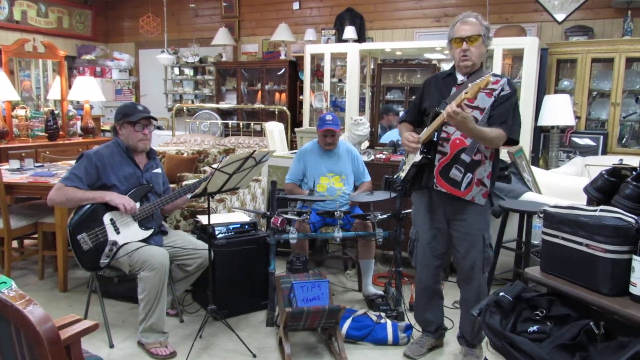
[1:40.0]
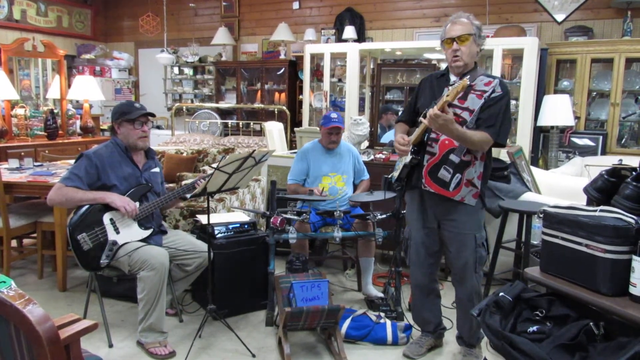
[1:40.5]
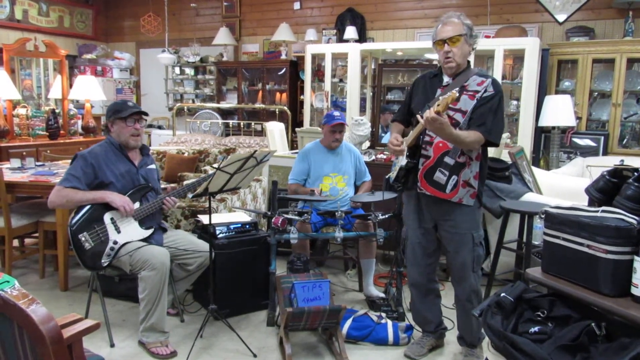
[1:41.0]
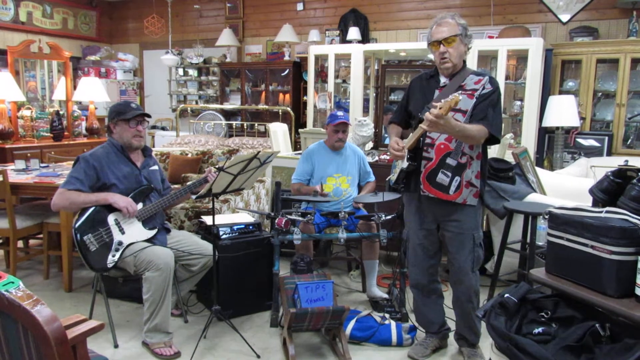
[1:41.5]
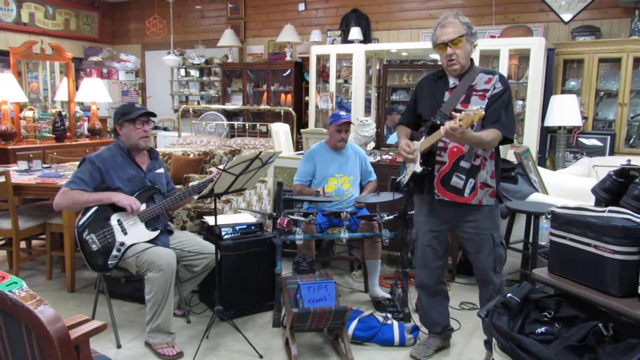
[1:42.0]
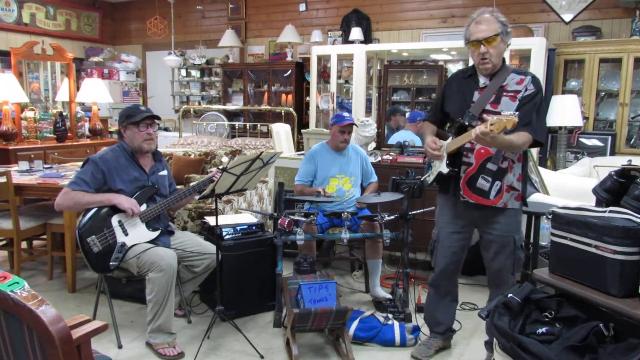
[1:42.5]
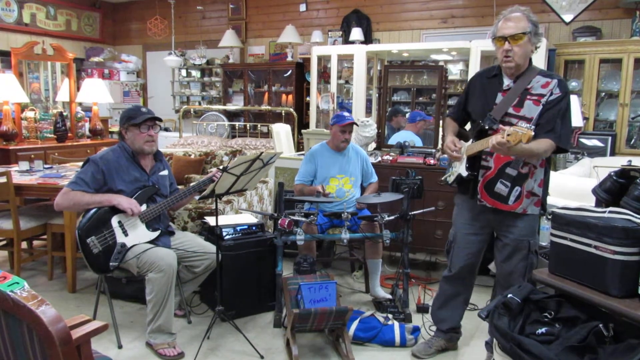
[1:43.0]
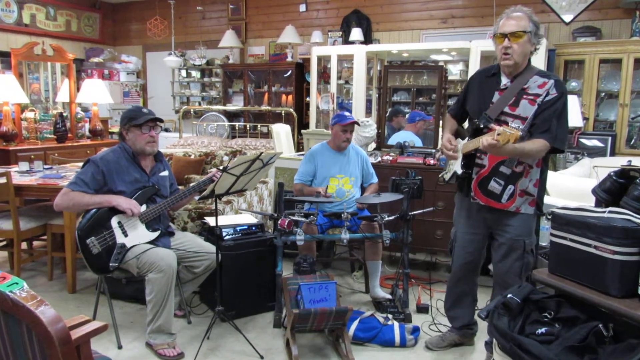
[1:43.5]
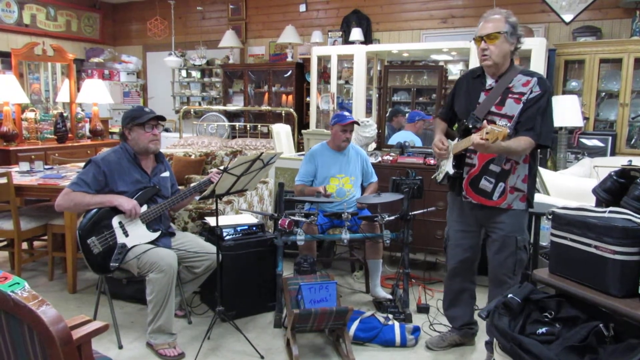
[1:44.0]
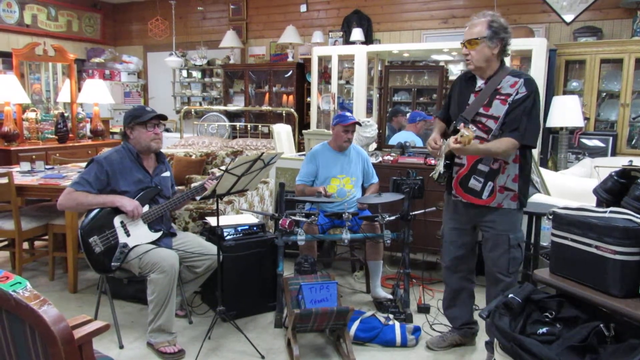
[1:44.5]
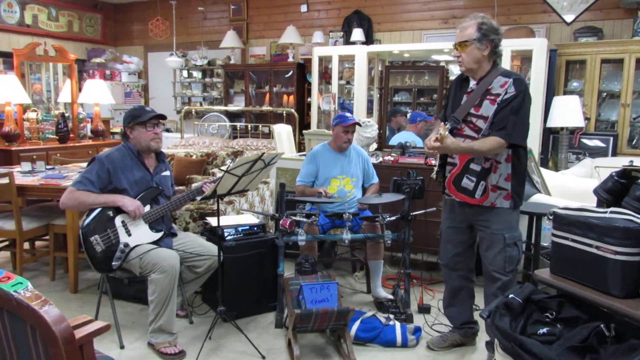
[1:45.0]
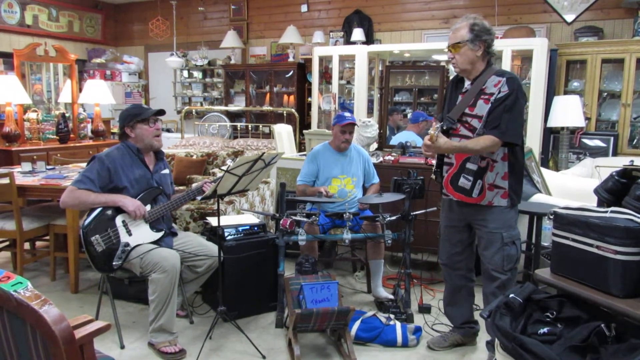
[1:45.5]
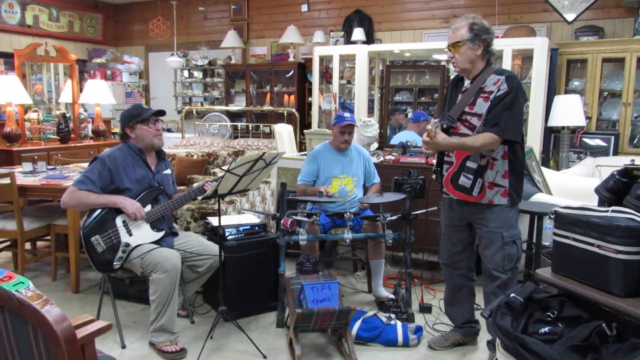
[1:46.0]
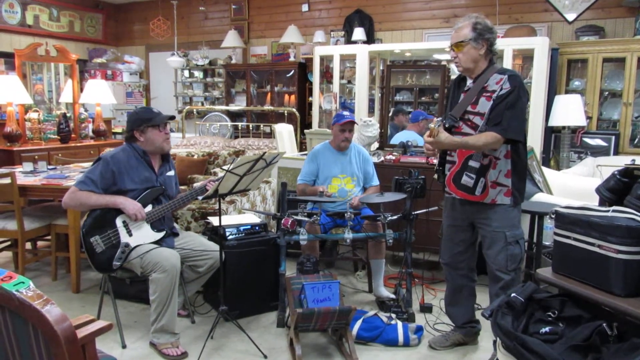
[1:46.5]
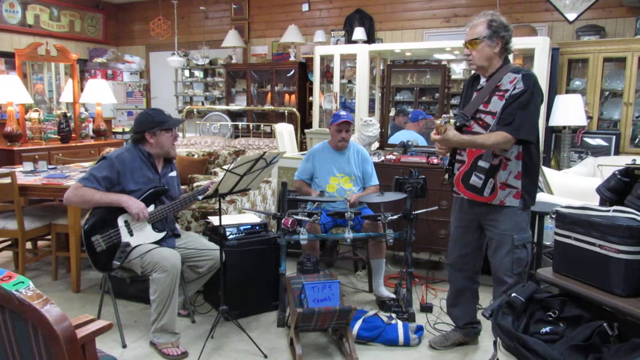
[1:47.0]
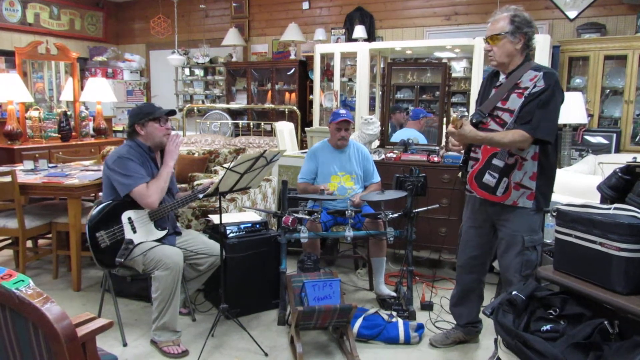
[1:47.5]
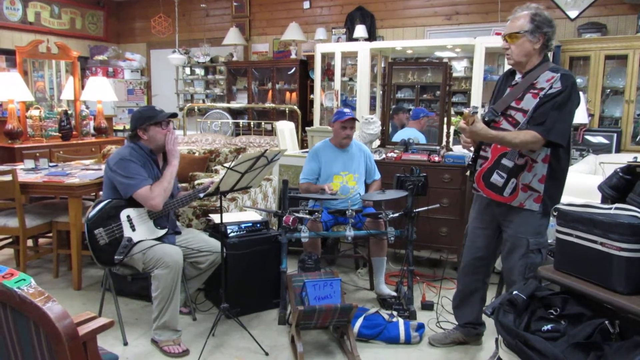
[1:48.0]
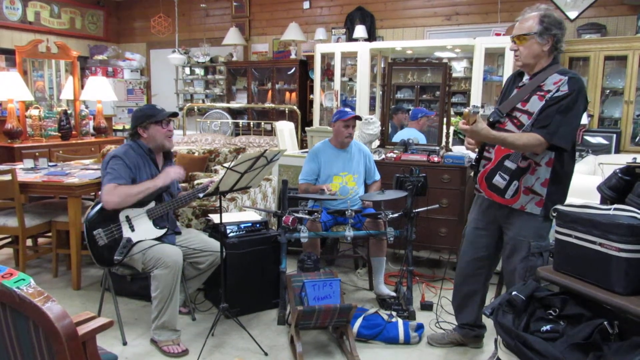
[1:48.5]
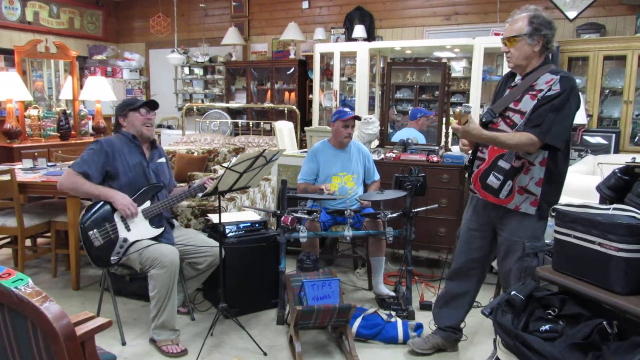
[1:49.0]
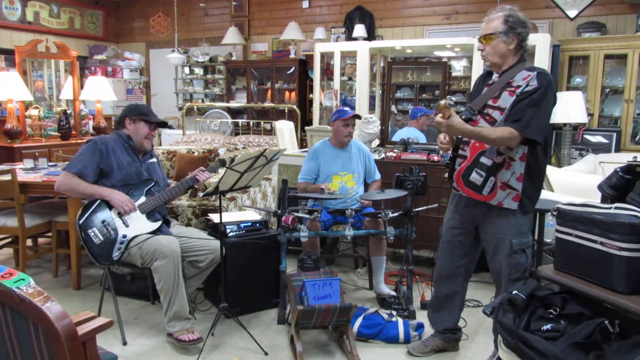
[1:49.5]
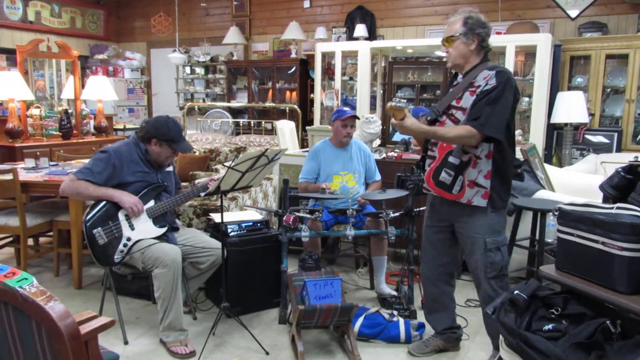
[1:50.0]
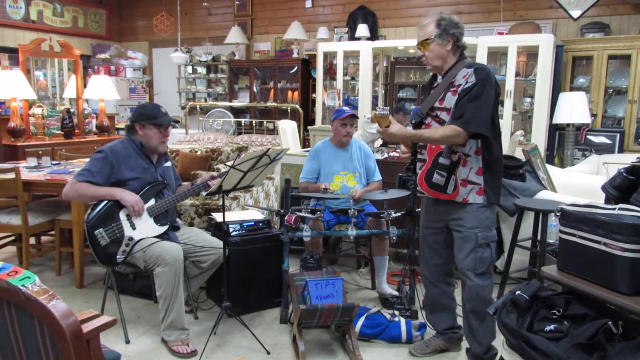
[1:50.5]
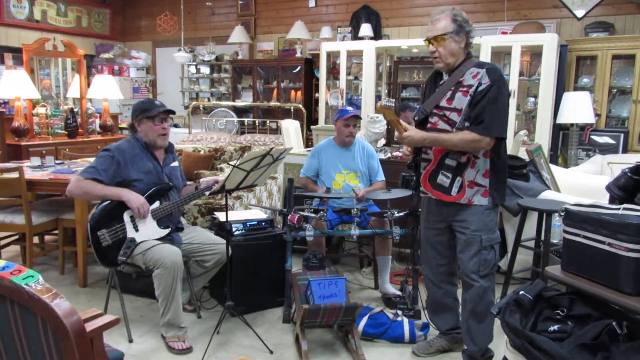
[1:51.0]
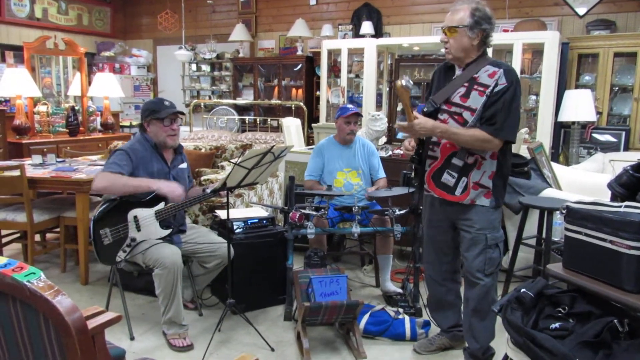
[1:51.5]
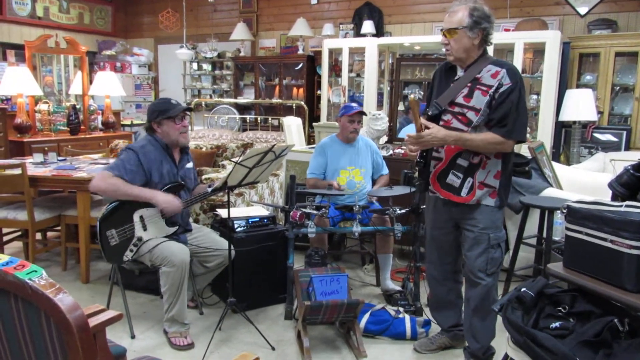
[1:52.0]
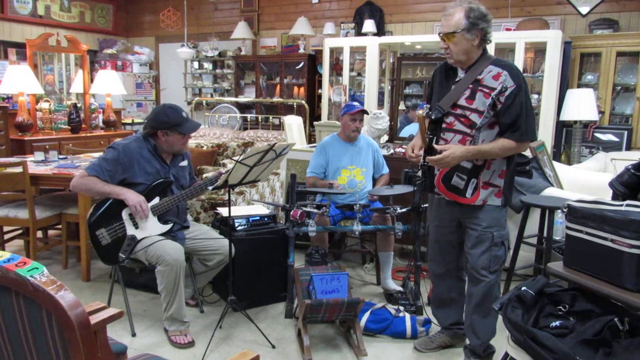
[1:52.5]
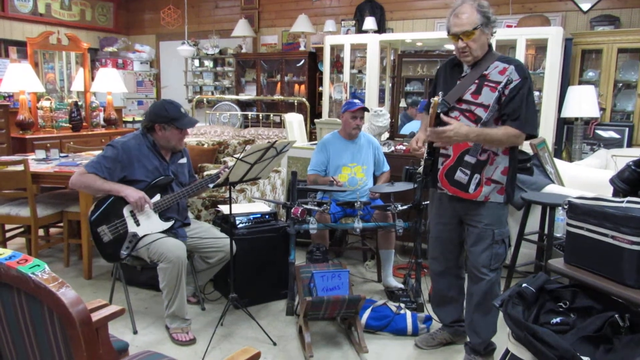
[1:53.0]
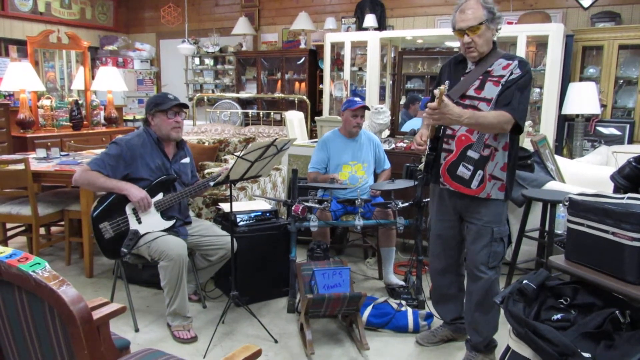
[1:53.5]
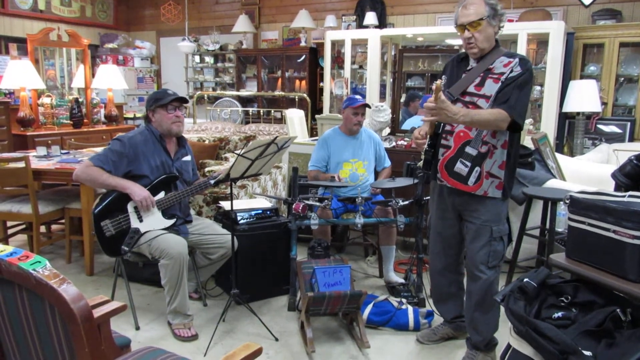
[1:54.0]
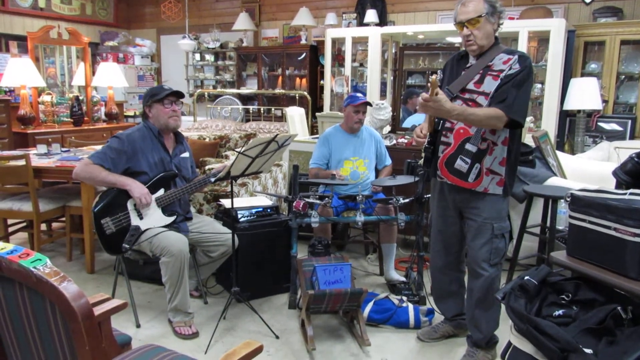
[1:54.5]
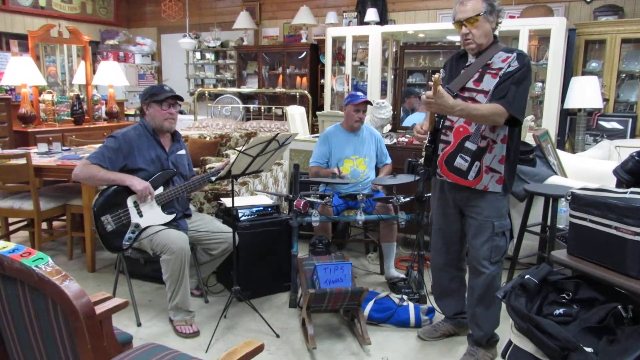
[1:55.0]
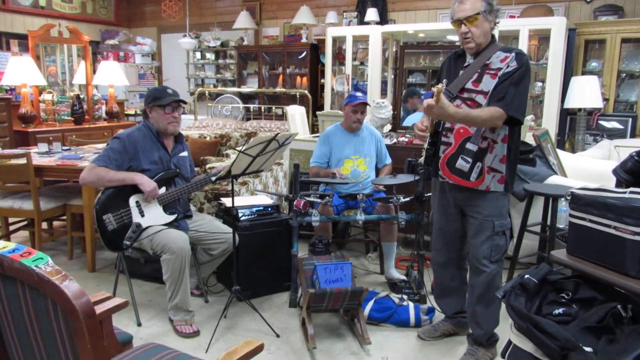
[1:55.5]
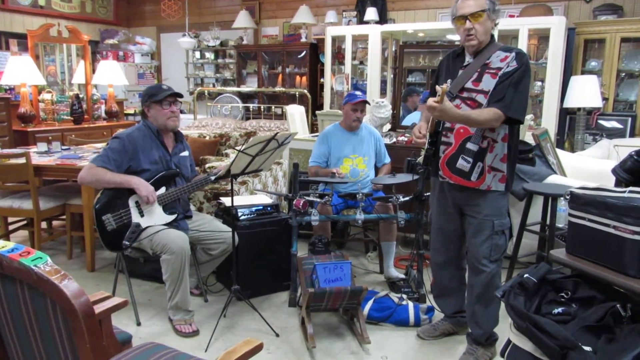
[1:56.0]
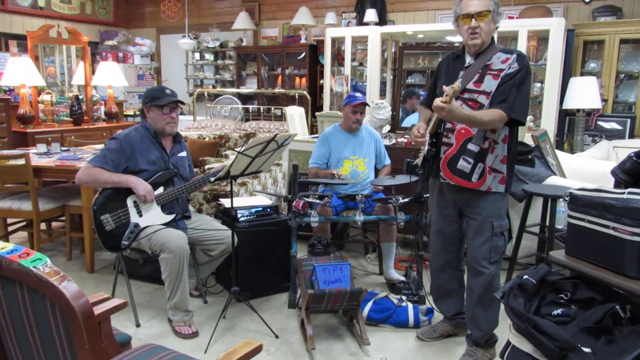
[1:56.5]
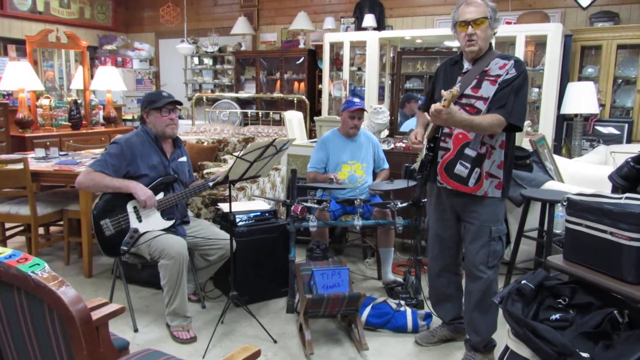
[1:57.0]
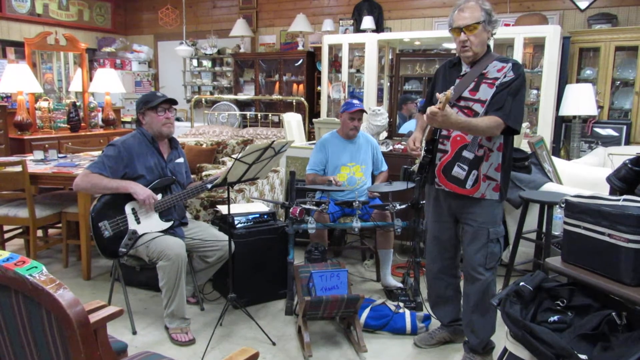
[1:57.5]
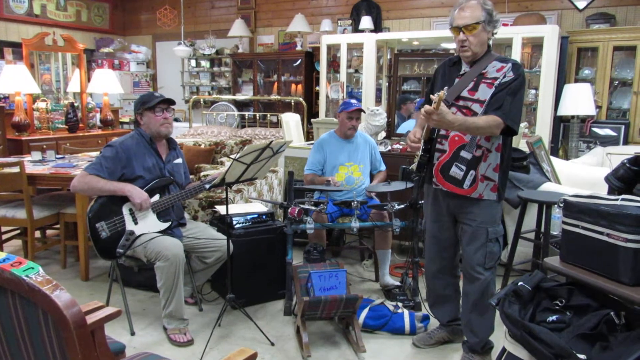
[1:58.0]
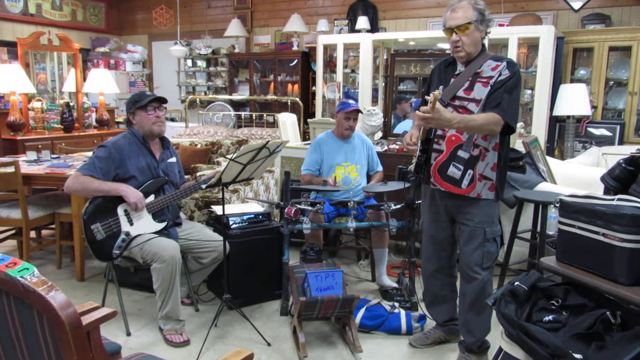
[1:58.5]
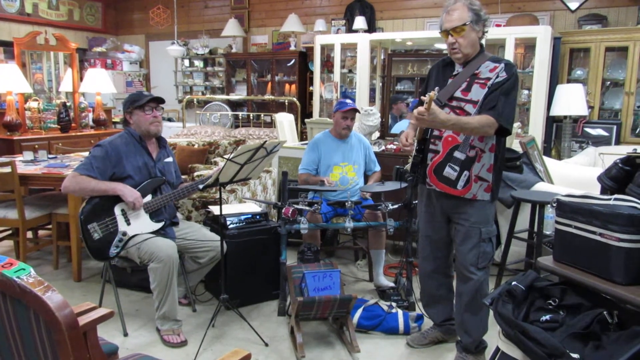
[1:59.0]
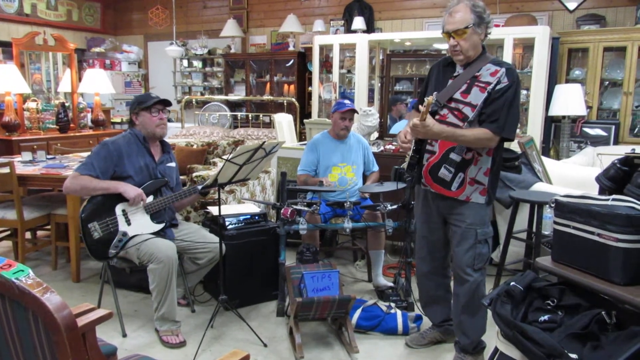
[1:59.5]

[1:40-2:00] The session continues at a moderate speed. The bass player is still reading from his notes and starts to talk to the guitarist, but they do not pause and keep playing. The drummer plays without any issues, and the guitarist is kind of speeding up a little. The guitarist has yellow glasses and a receding gray hairline. In the background are the cabinets: the light tan one to the right, the white one in the middle, a darker brown one to the left of the white cabinet, and one with a mirror that has a kind of Indiana Jones ark look. The walls are brown, and there is something almost like a dream catcher in the background. A fan is going. There is a lot of clutter and the table; it is a tight space without much room to walk or move around. The tip jar is there.